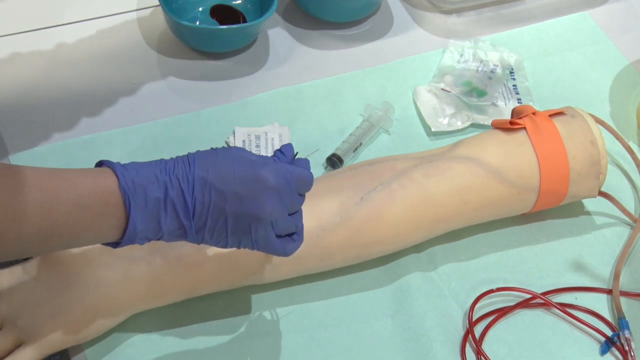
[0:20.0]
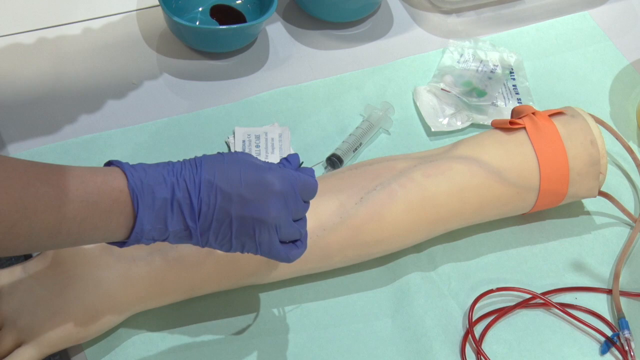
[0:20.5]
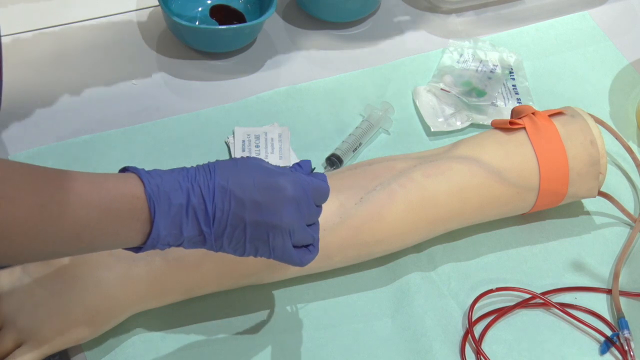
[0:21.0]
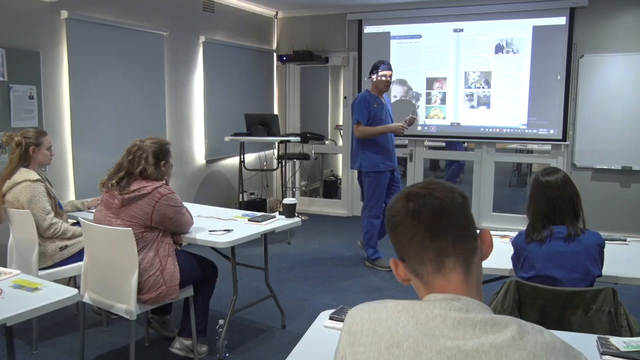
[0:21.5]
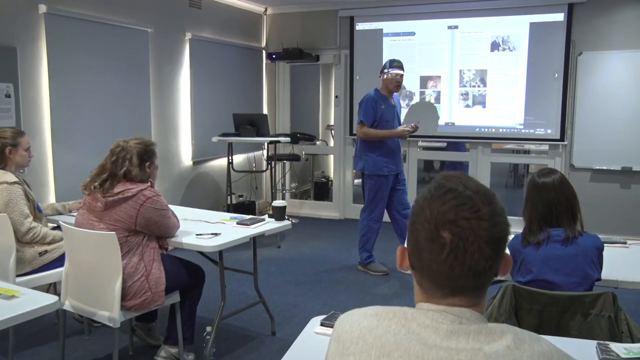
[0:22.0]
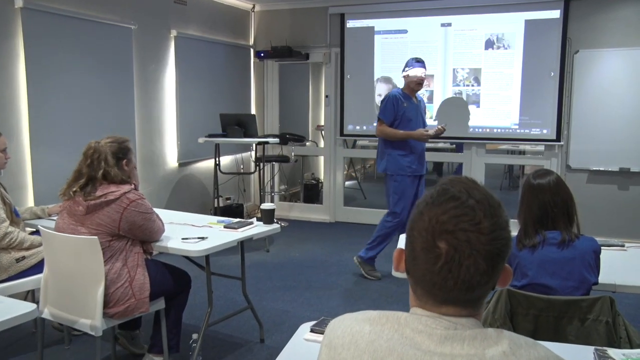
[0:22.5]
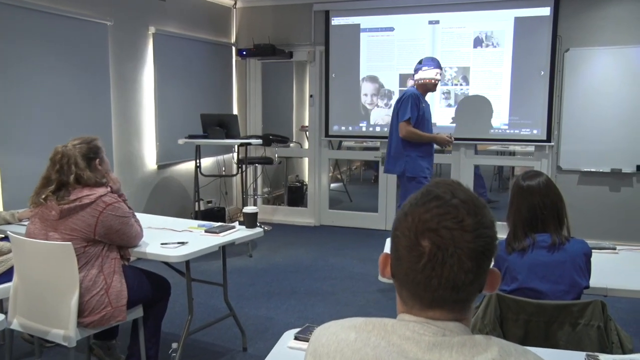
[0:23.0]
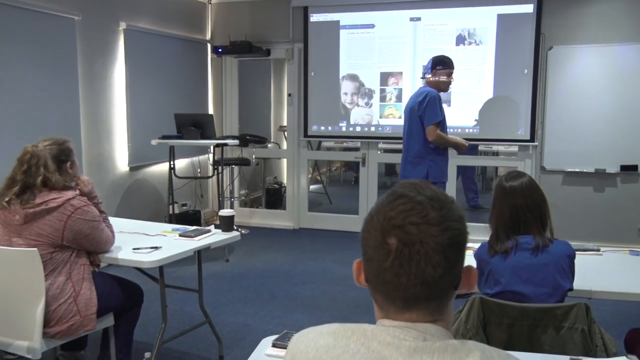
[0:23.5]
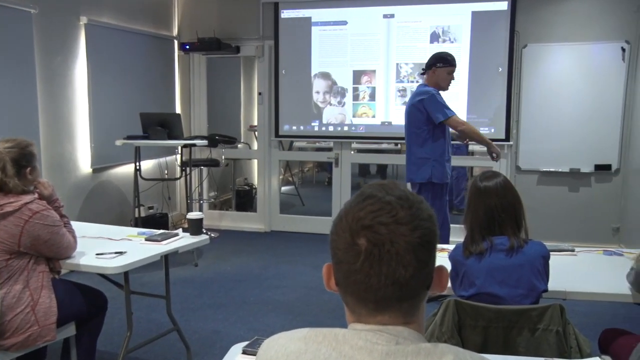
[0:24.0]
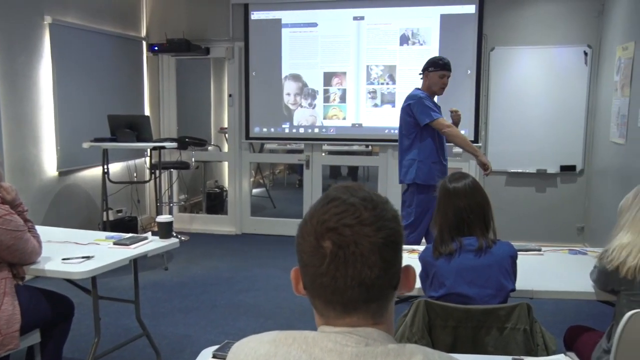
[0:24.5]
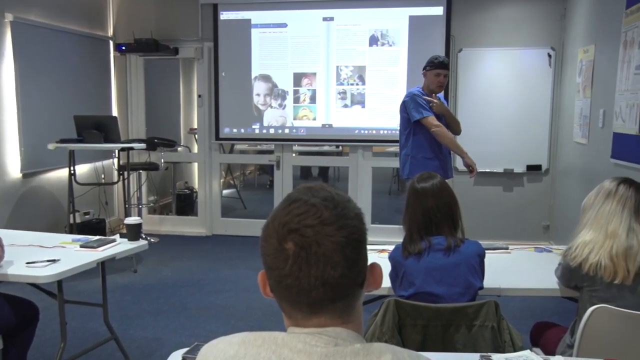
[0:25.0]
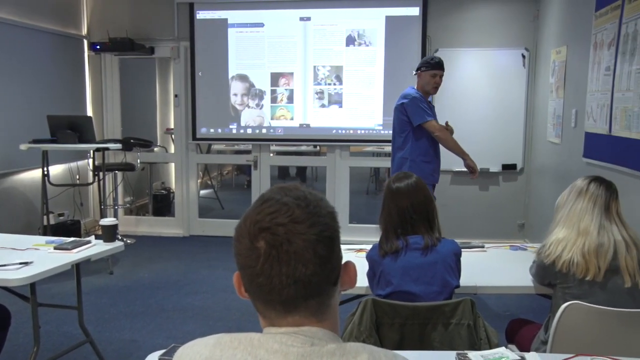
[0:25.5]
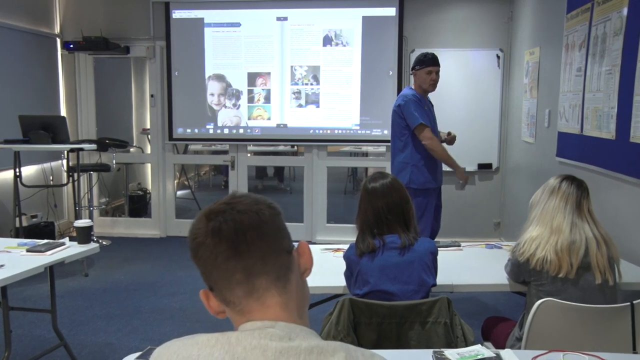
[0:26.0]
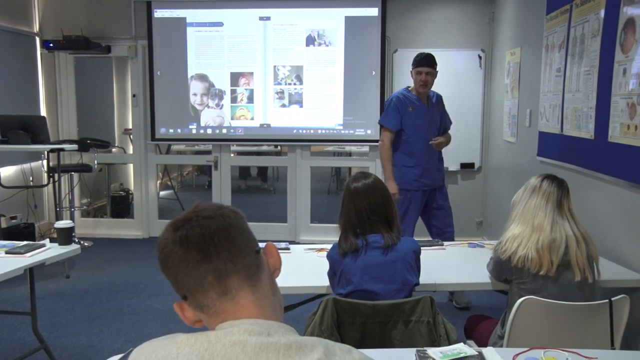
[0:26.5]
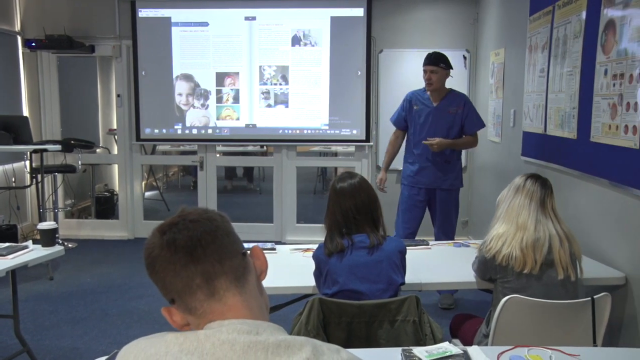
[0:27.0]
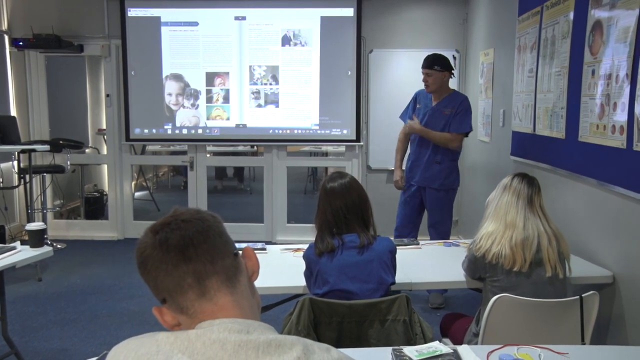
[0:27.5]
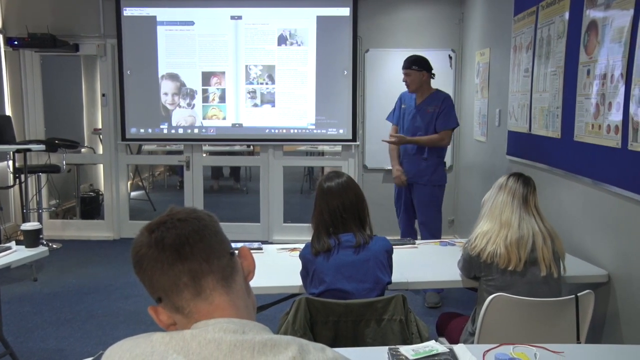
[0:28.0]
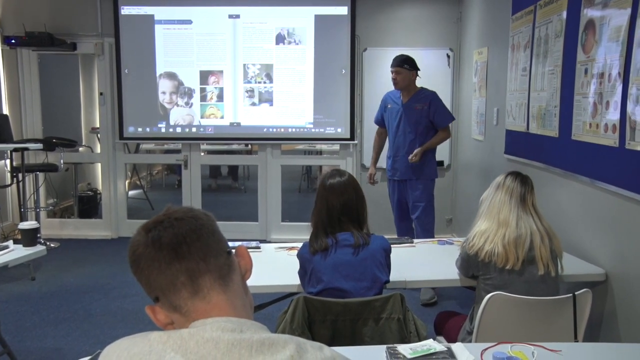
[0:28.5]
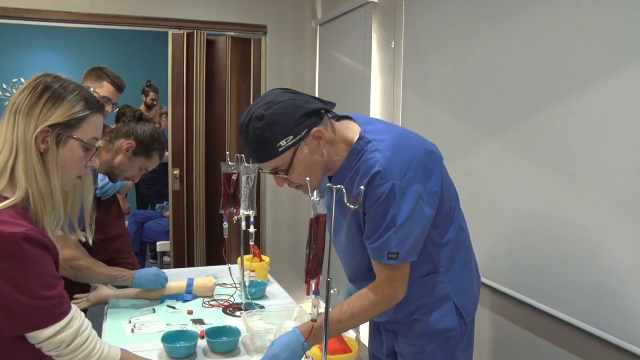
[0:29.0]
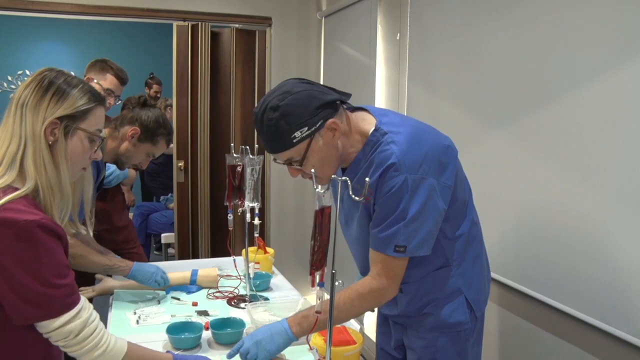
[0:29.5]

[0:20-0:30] A hand in a blue medical glove pokes a needle into a fake dummy arm lying on the table. A sort of orange band is wrapped around the upper part of the dummy arm, possibly used as a constrictor. The scene changes to a man in blue hospital scrubs giving a lecture to a small classroom in front of a projector screen that appears to show some kind of open book. Walking in front of the screen, he holds out his right arm with the fingers pointing to the ground and runs his left index finger down the length of the arm from his shoulder to about his elbow. He continues talking to the class and again motions down his right arm with his left hand, from the shoulder to the elbow. In the next scene, the man in blue hospital scrubs stands behind a table while what appear to be a few students on the other side go through the demonstration of putting a needle into the fake dummy arms lying on the table; about two men and one woman are doing the demonstration.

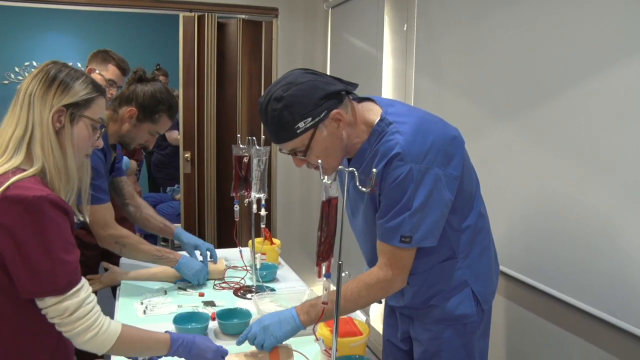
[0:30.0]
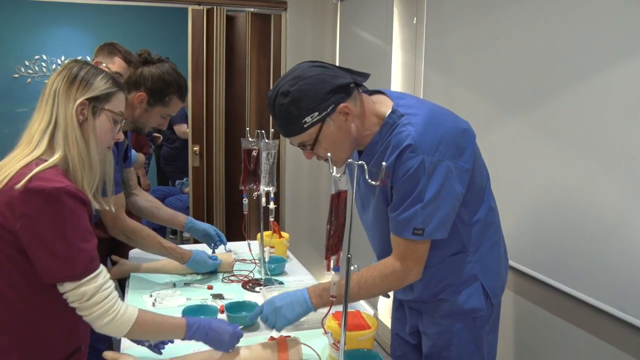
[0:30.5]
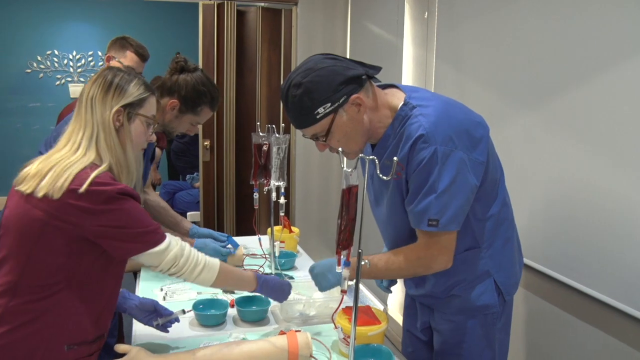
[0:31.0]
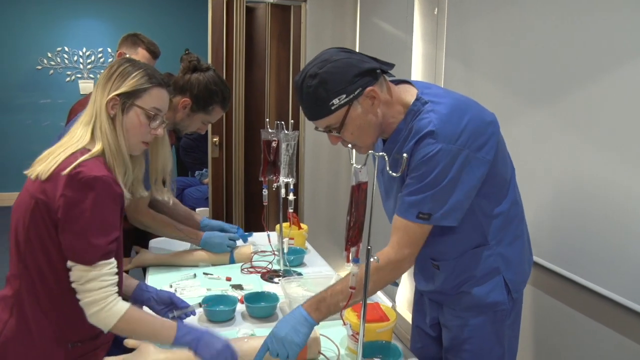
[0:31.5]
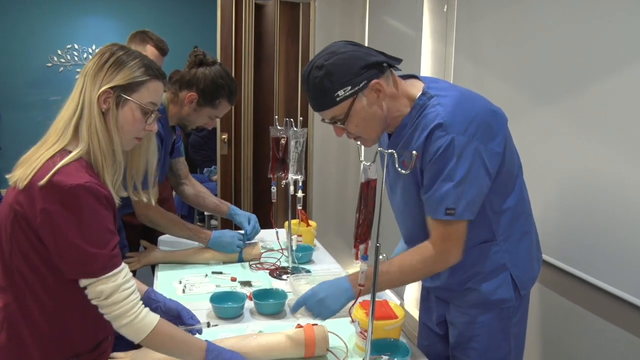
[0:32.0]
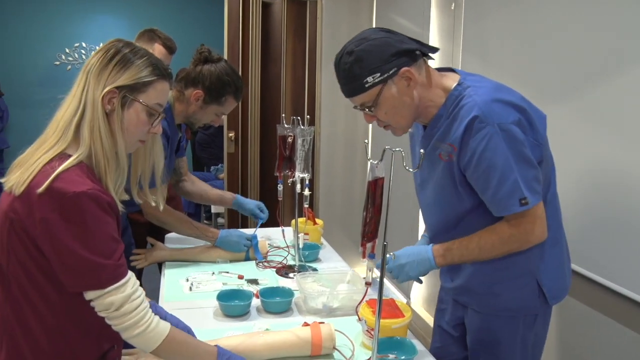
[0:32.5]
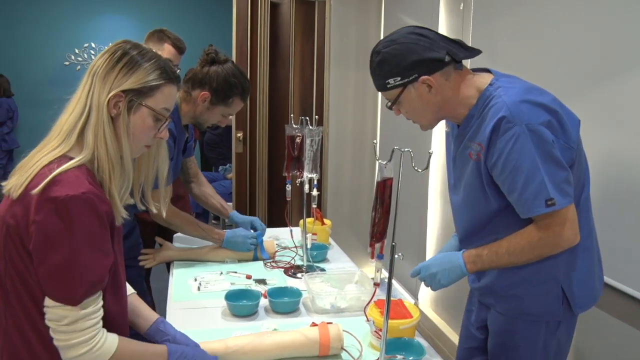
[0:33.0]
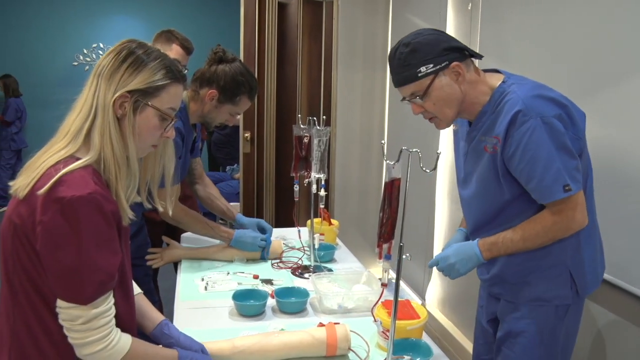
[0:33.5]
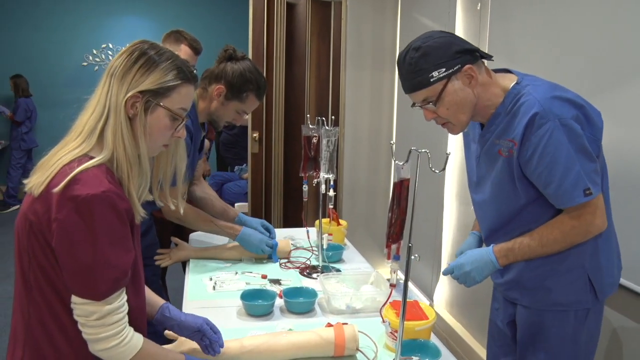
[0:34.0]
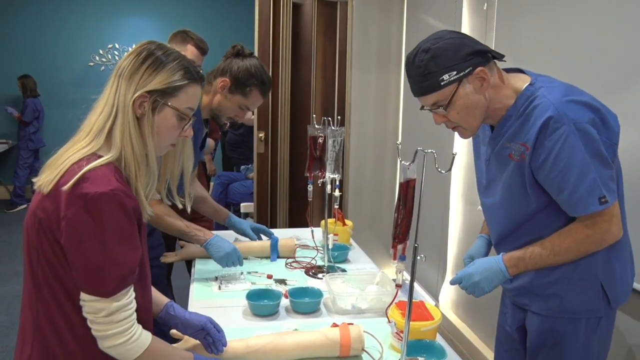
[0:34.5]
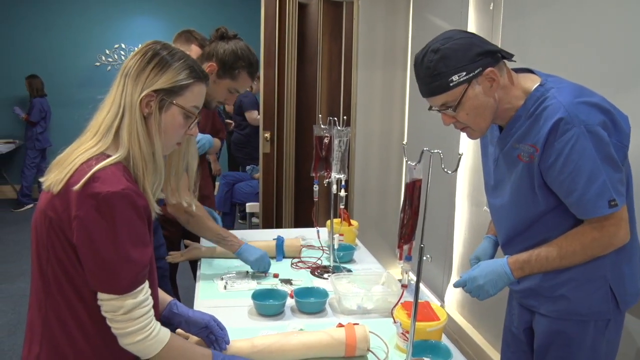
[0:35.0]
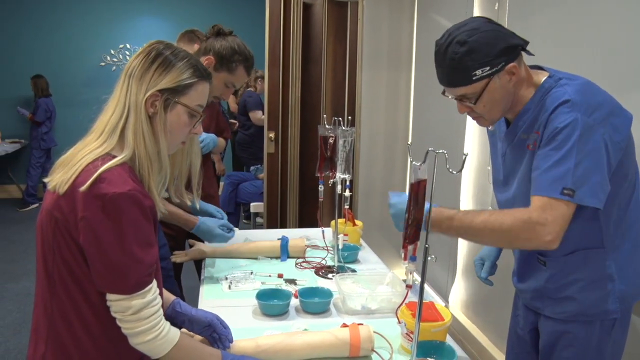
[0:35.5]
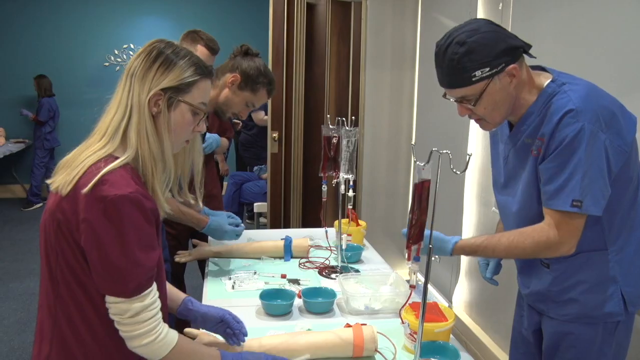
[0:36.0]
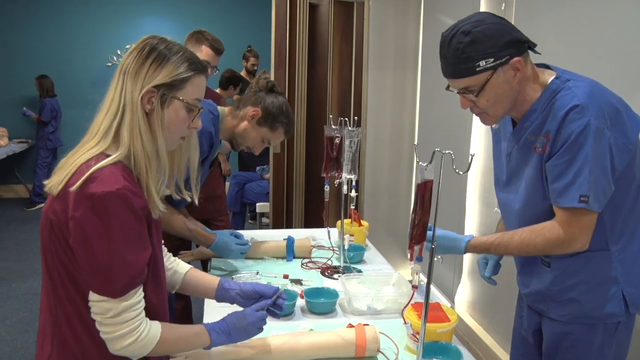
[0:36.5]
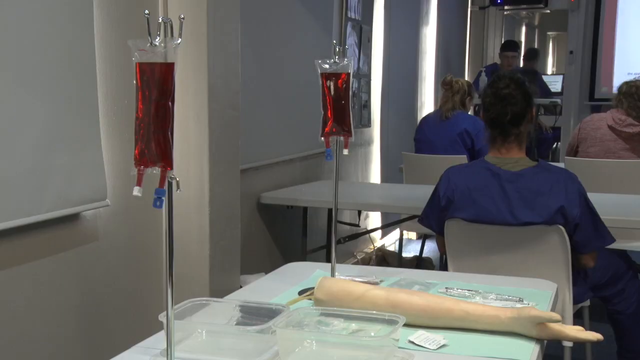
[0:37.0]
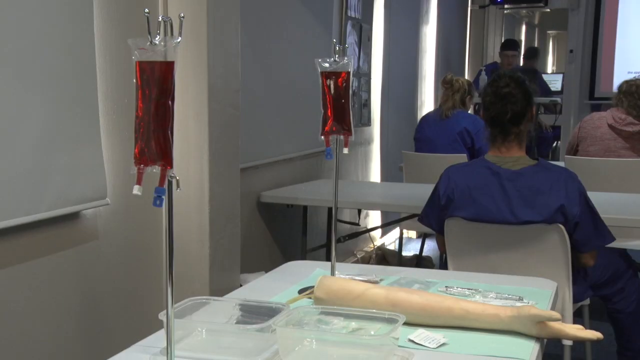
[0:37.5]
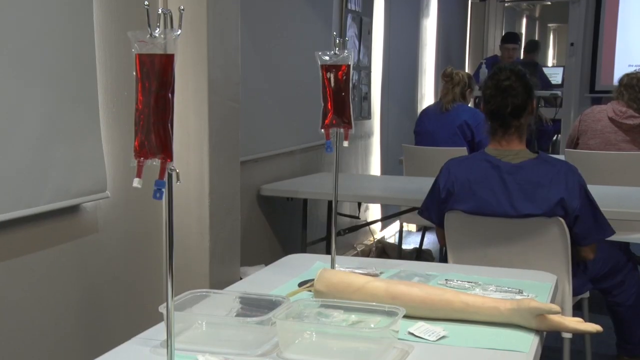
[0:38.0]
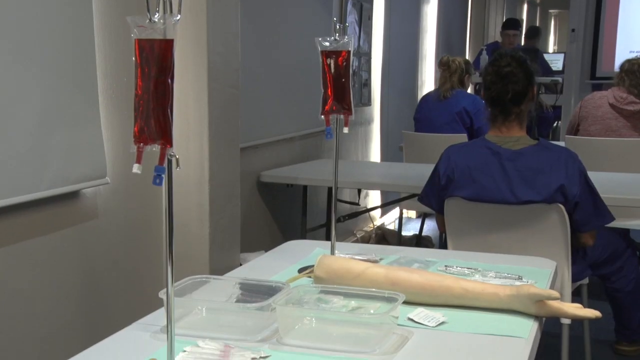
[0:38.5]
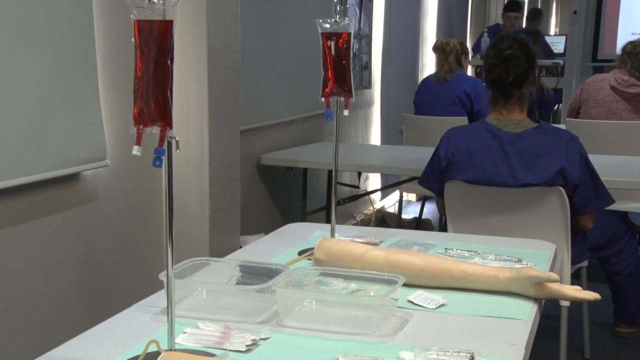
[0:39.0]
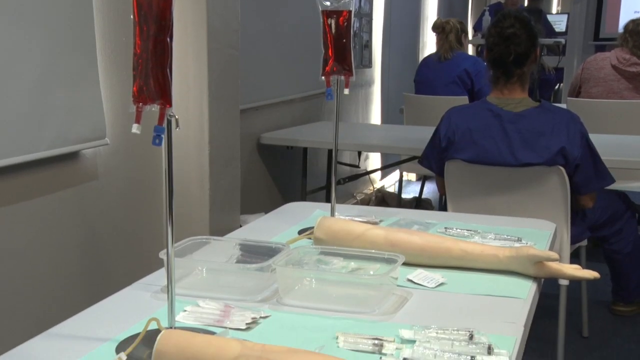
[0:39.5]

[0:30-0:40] A few people crowd around a table working on a demonstration of giving an injection into a dummy arm. At one end of the table is what appears to be an instructor in blue hospital scrubs, sort of observing and helping where he can. A man on the left, in blue hospital scrubs and blue gloves, appears to be tying a large blue rubber band around the top part of the dummy arm to constrict the circulation. A woman on his right holds a needle in one hand as if getting ready to give the dummy arm an injection. The scene changes to what looks like the back of the classroom, where the backs of a few students face a screen at the front. A little table set up at the back holds a few medical supplies and dummy arms, along with metal rods holding hanging bags that contain what looks like blood.